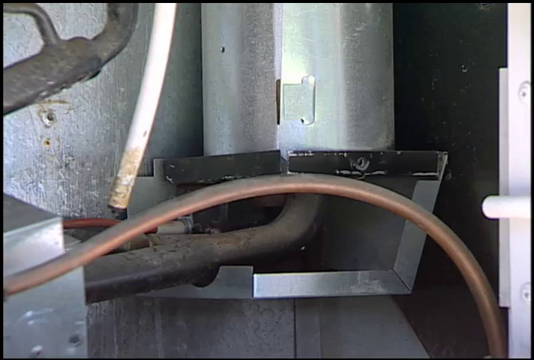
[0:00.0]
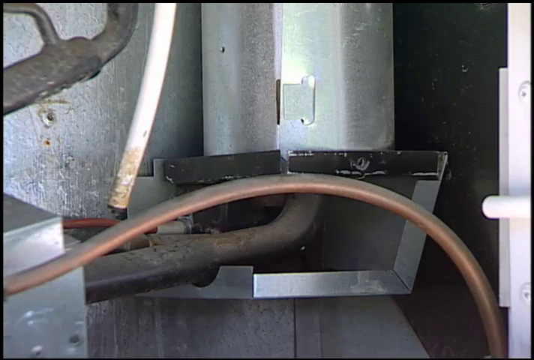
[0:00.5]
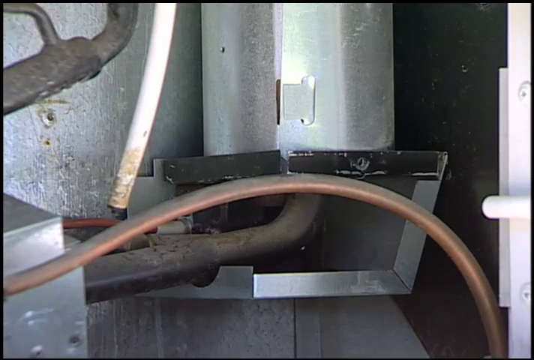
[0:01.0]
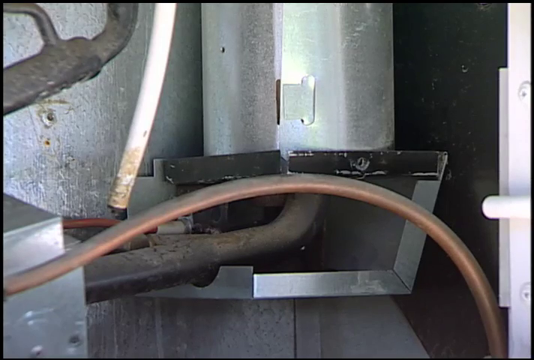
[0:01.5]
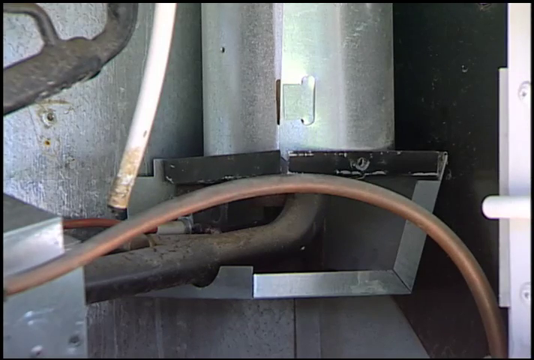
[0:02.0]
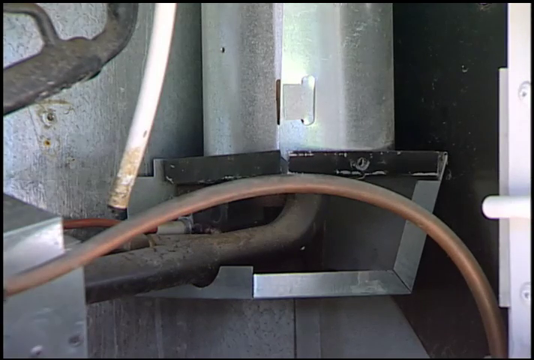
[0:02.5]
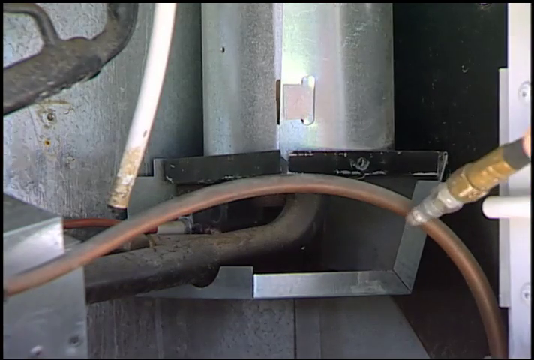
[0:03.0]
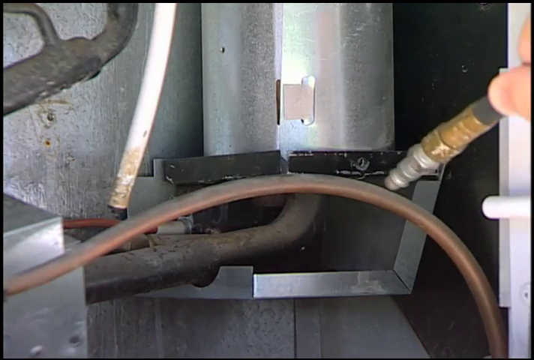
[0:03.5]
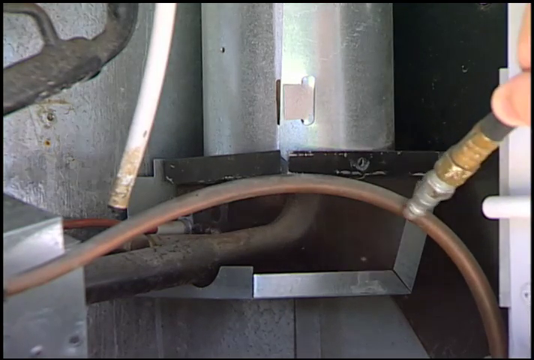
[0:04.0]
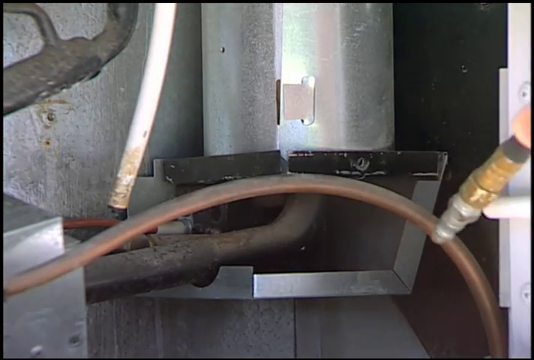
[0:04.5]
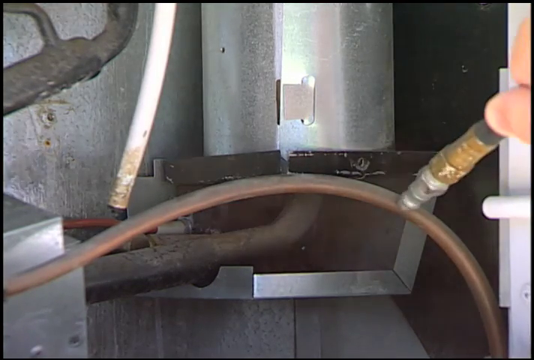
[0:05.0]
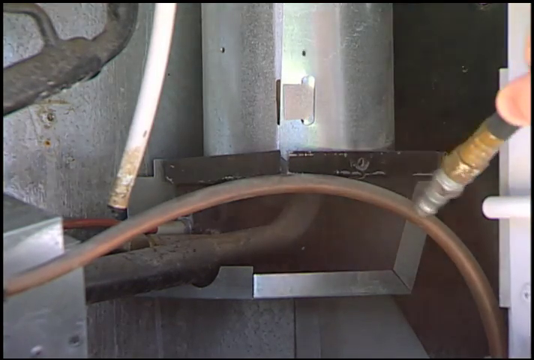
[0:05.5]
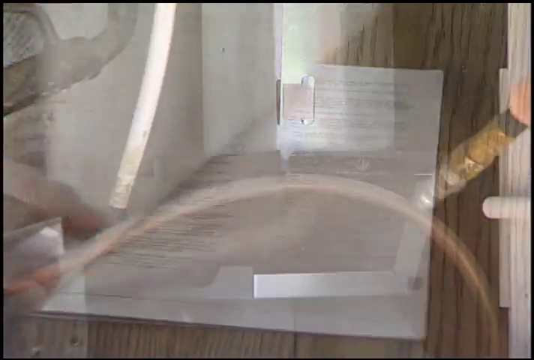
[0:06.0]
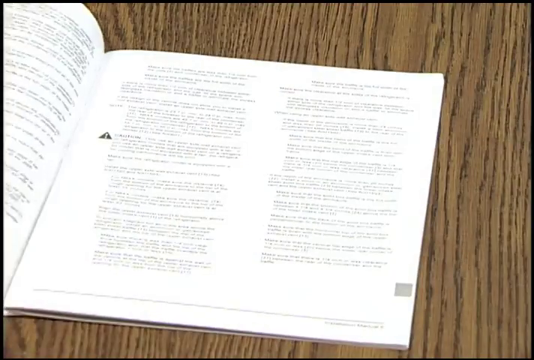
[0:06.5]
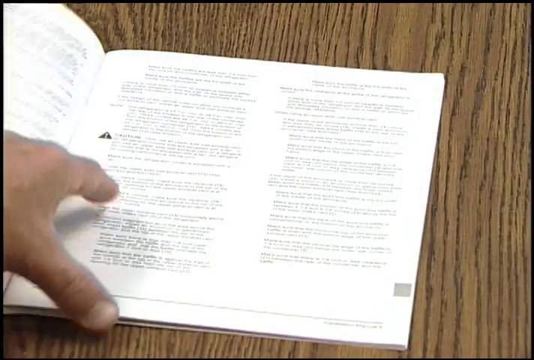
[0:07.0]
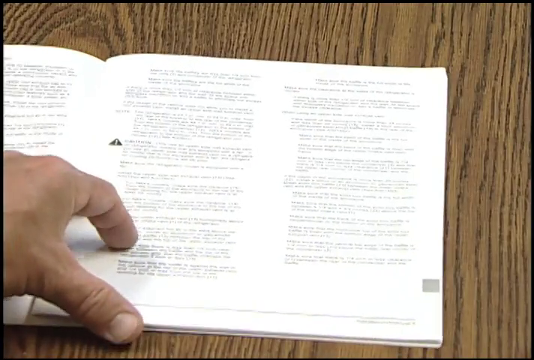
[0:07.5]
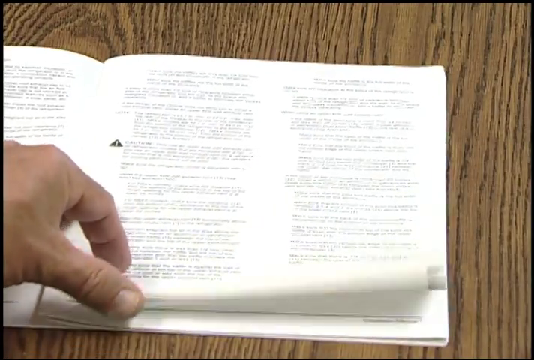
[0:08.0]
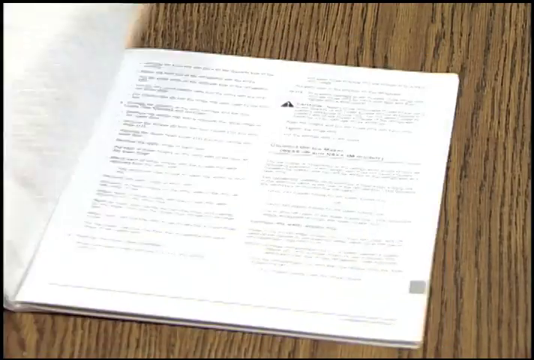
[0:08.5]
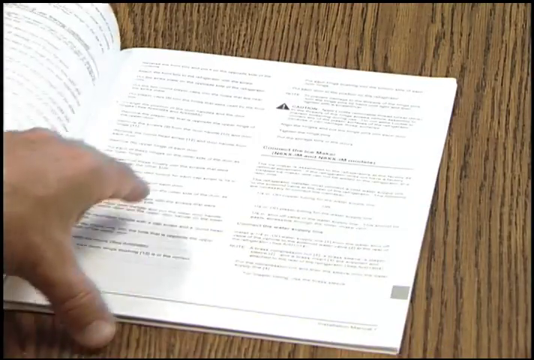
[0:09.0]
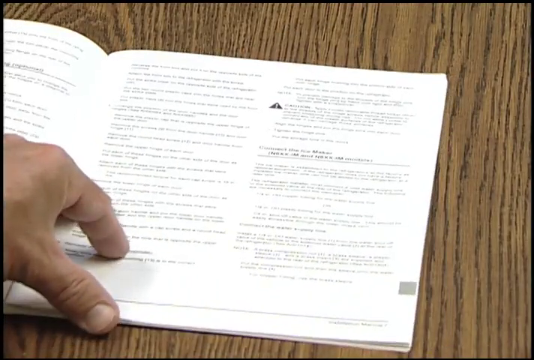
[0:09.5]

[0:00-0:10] The video concerns a cleaning process and the equipment used for it. A book is shown that indicates how to use the equipment, and the equipment itself is shown, though exactly how things are done is not made clear.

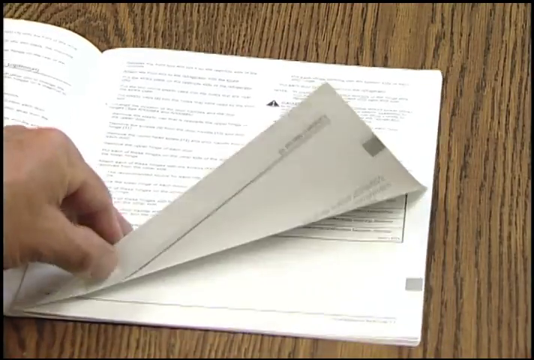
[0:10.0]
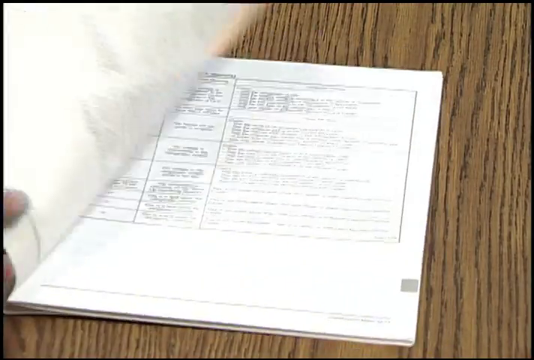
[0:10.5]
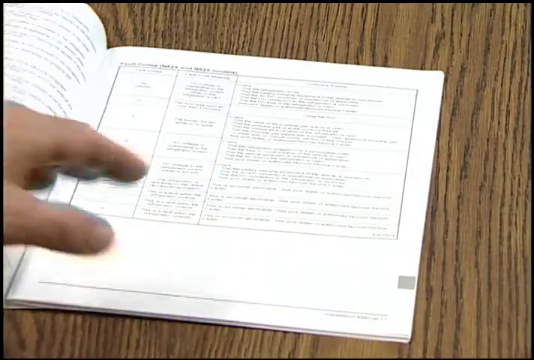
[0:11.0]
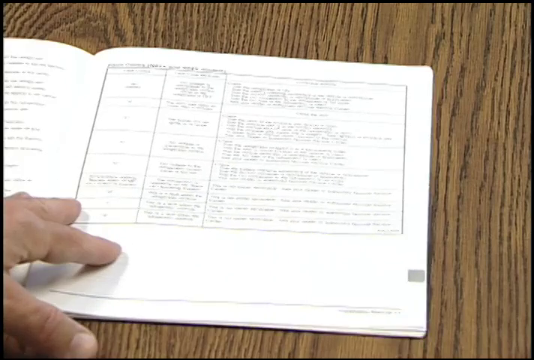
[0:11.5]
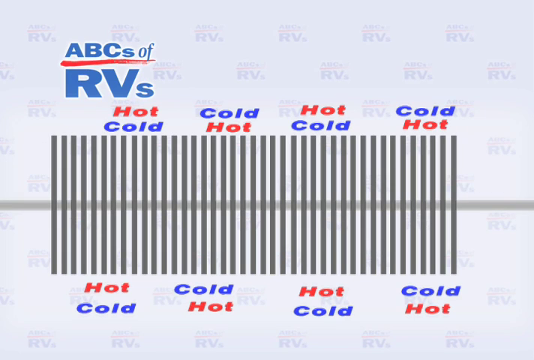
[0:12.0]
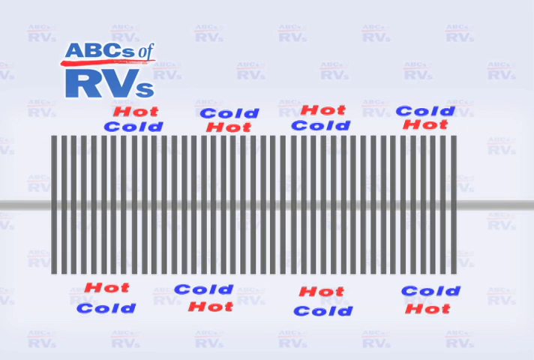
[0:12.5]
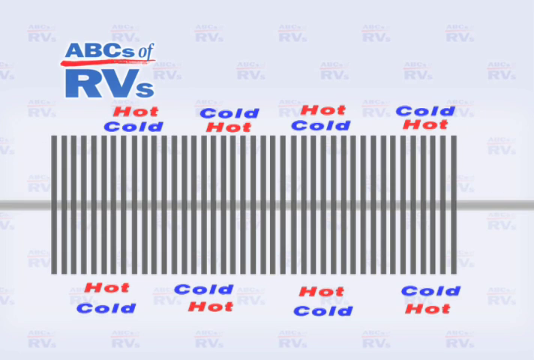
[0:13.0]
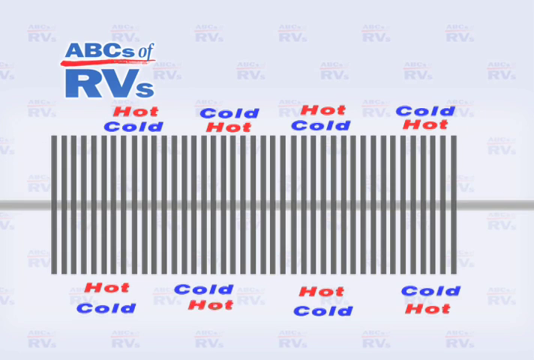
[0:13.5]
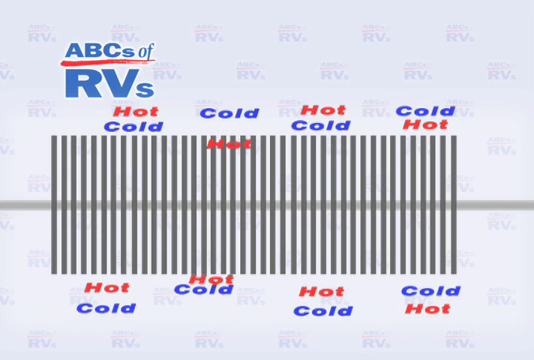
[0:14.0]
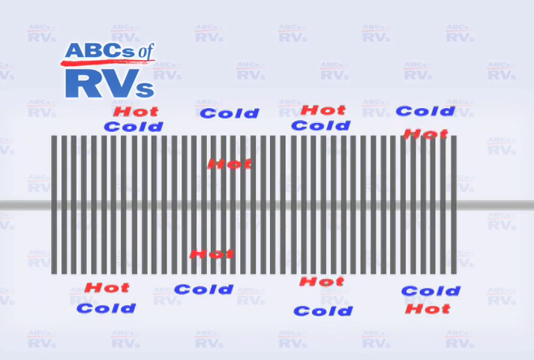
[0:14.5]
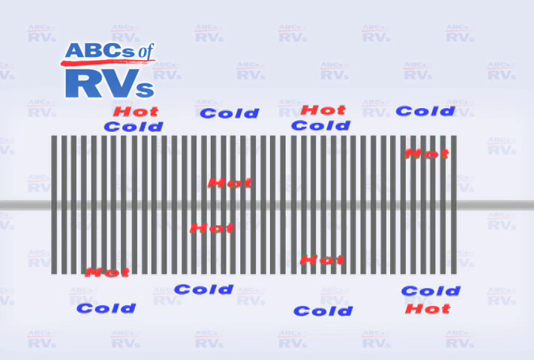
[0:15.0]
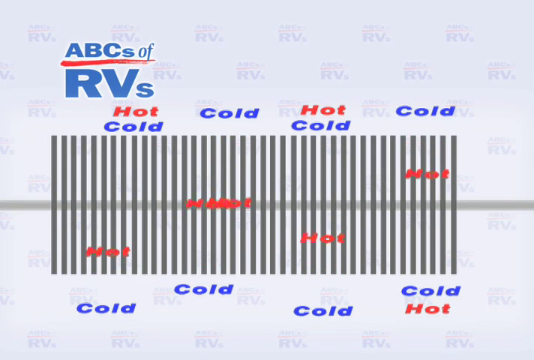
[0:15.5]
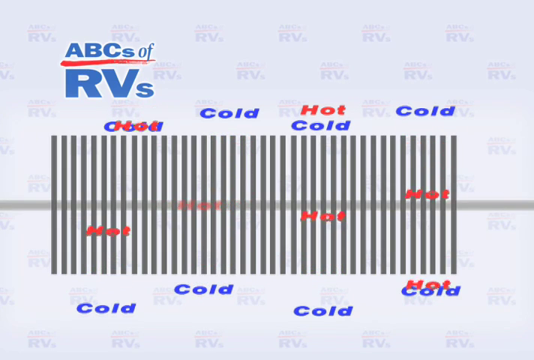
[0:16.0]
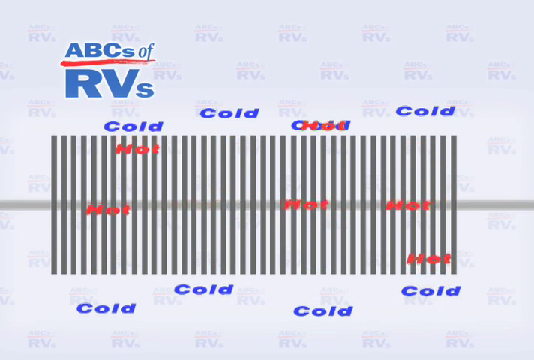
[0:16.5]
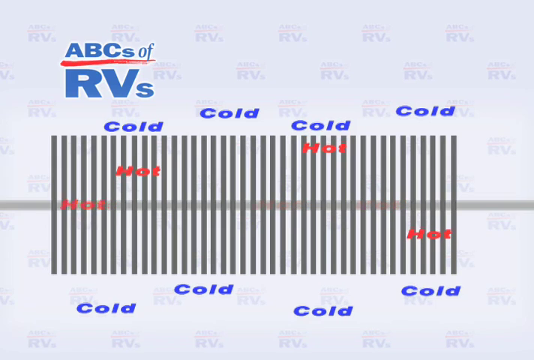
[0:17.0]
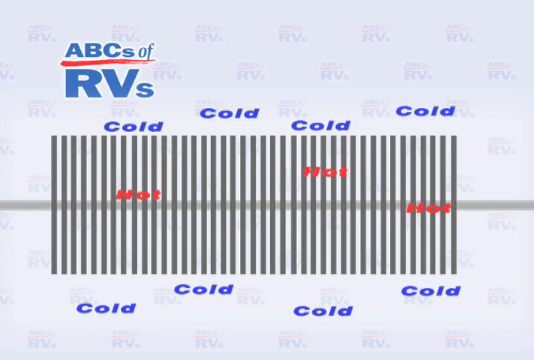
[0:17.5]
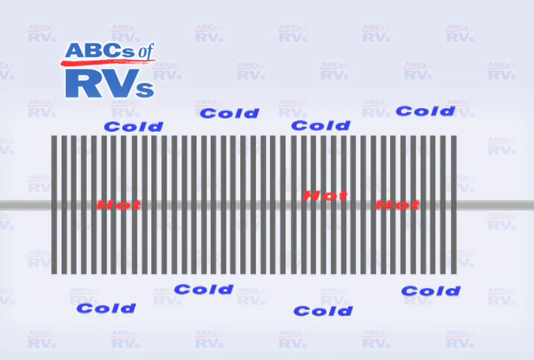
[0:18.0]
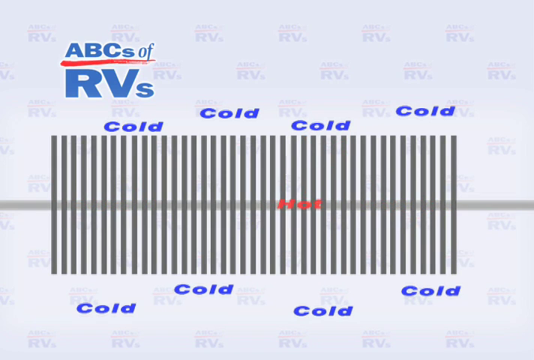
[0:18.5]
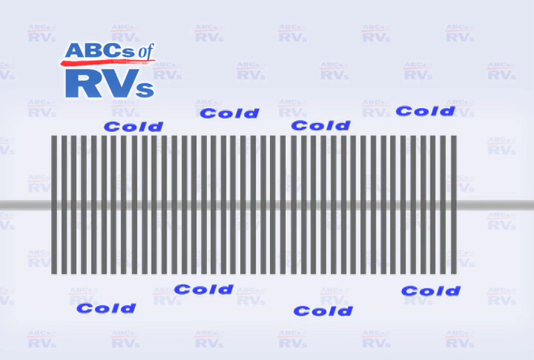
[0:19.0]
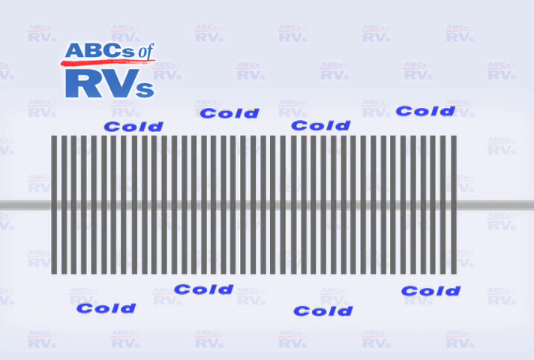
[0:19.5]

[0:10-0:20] A product or material is shown along with how it works: the ABCs of RVs, with the cold ones in blue and the hot ones in red. Instructions on how everything can be done are also shown.